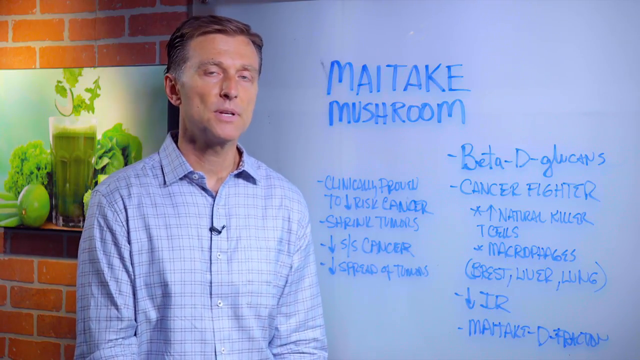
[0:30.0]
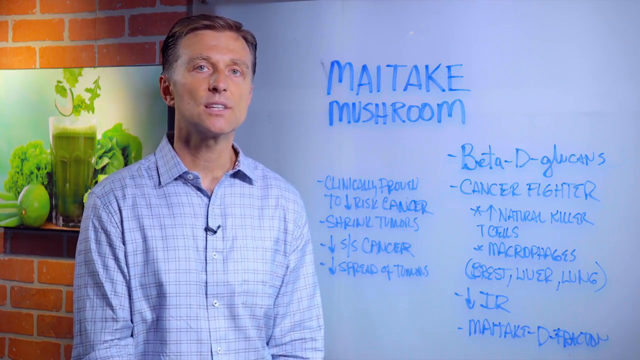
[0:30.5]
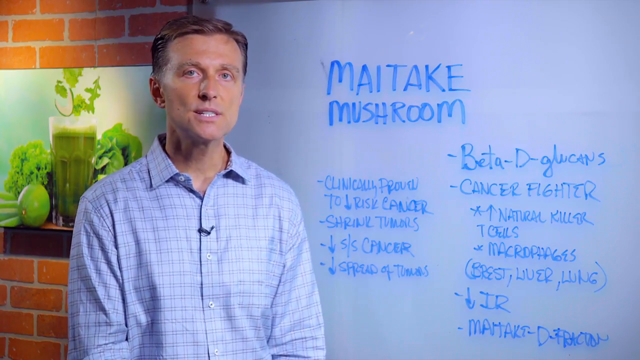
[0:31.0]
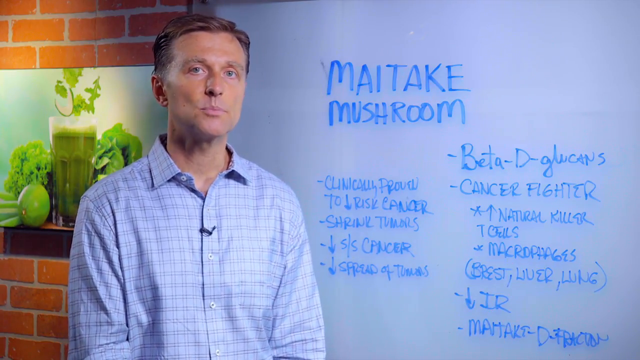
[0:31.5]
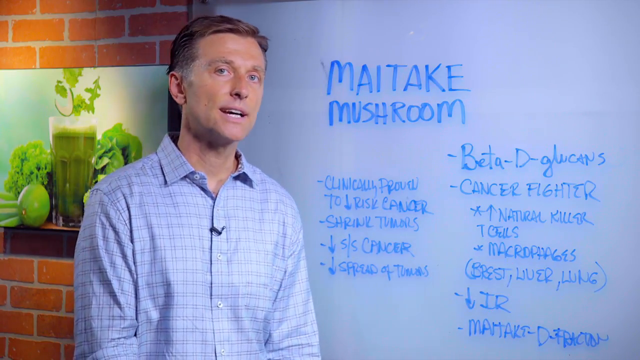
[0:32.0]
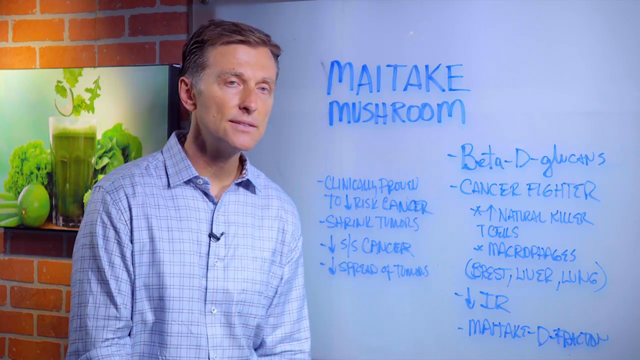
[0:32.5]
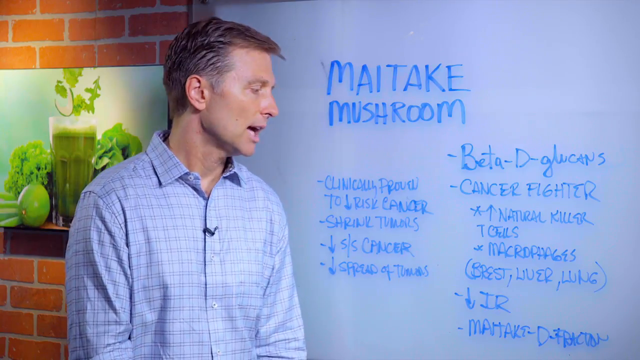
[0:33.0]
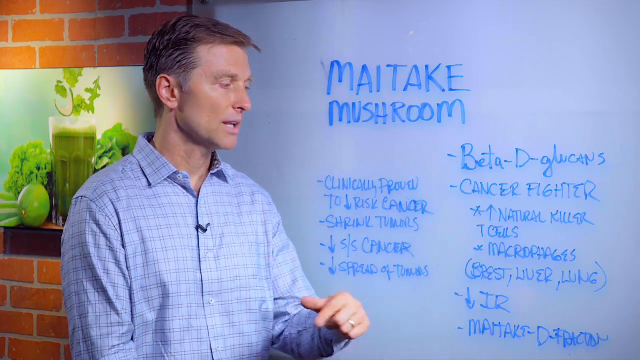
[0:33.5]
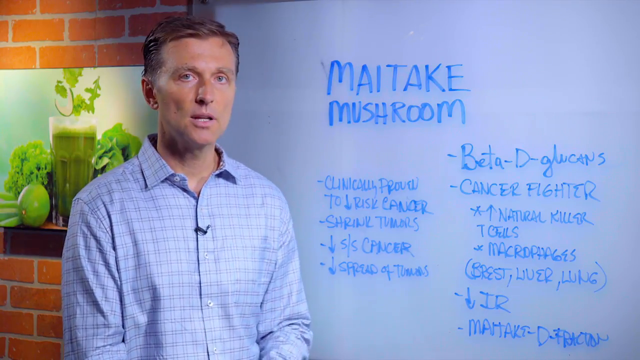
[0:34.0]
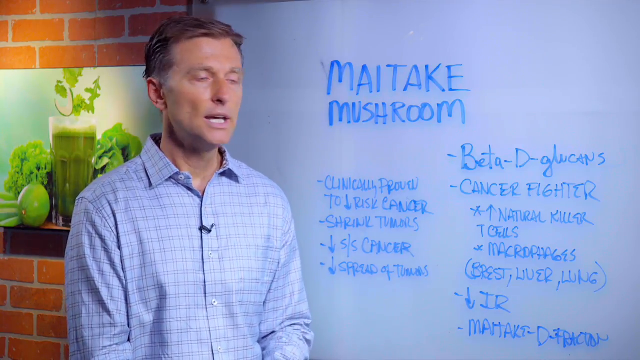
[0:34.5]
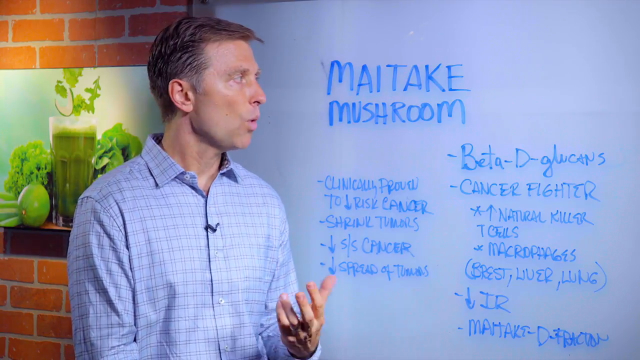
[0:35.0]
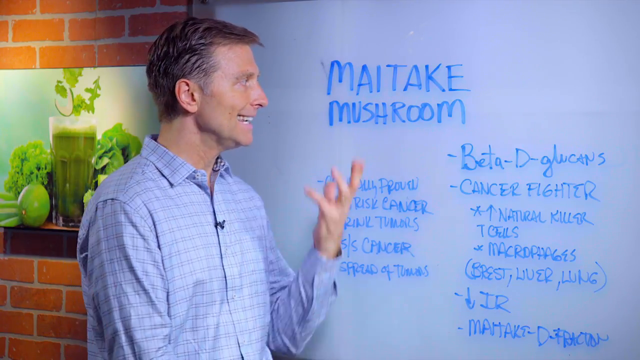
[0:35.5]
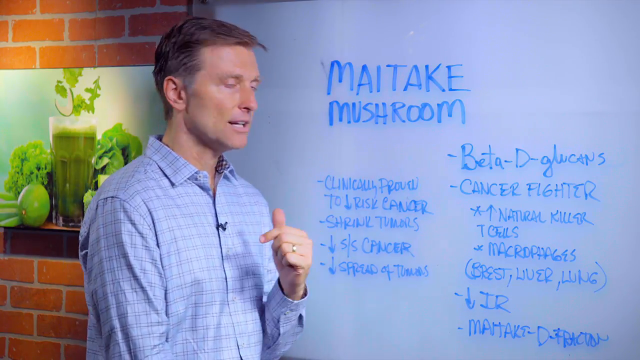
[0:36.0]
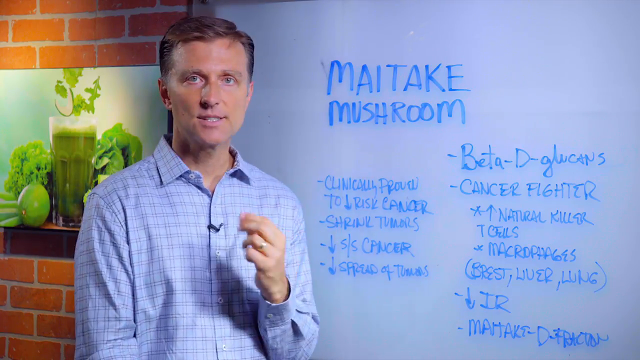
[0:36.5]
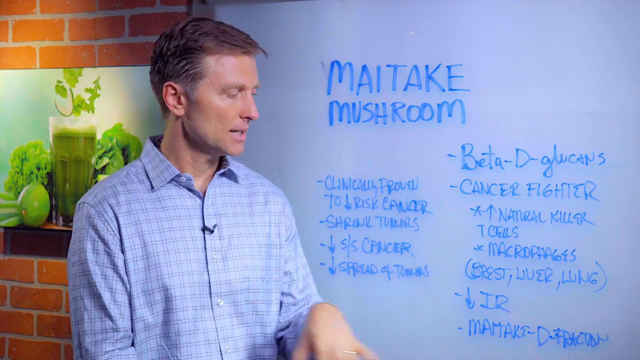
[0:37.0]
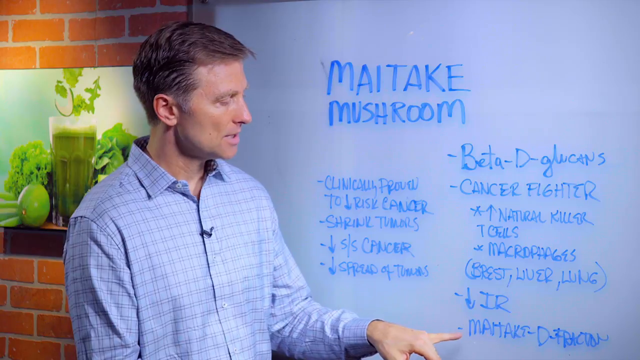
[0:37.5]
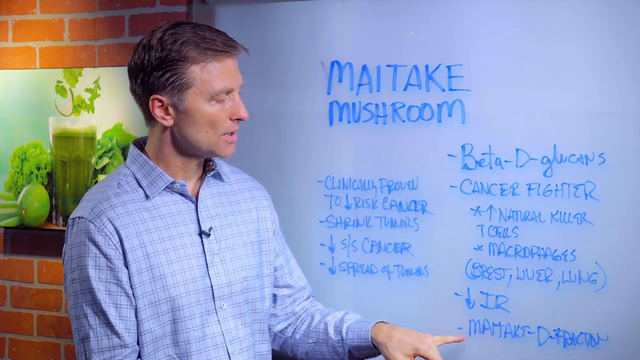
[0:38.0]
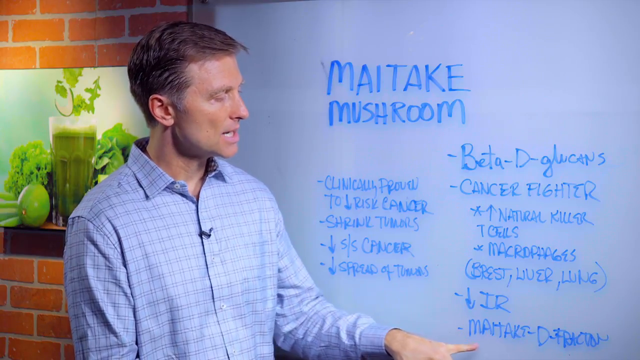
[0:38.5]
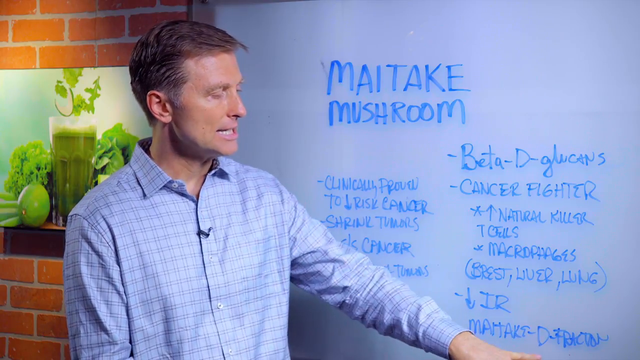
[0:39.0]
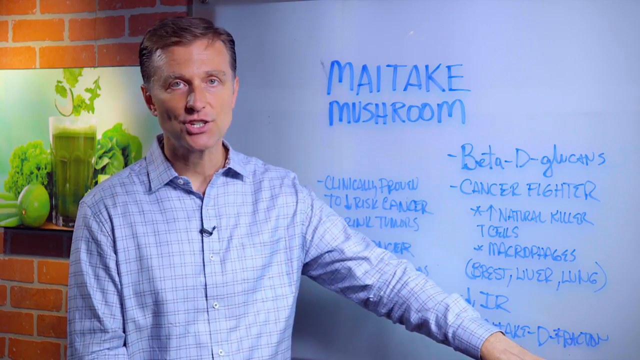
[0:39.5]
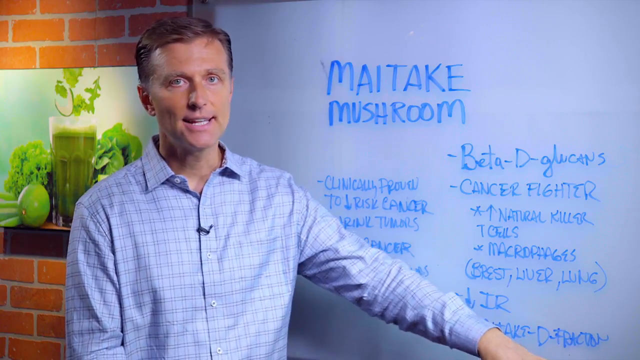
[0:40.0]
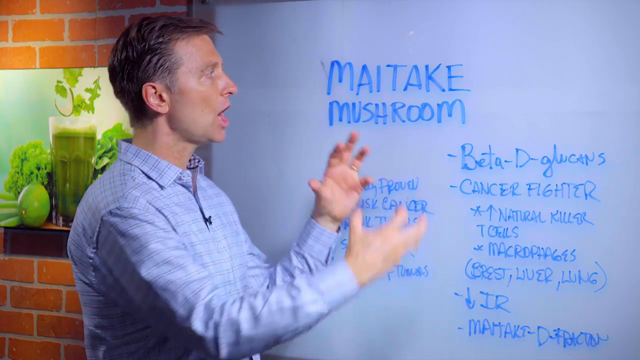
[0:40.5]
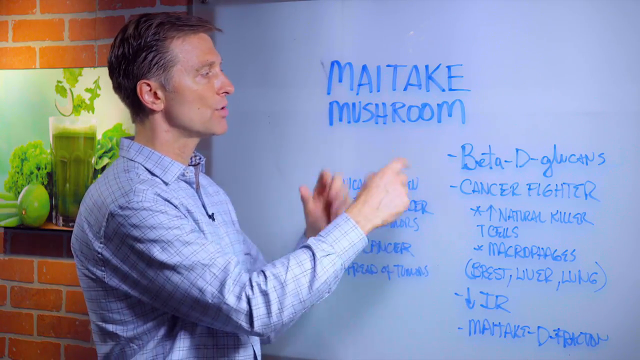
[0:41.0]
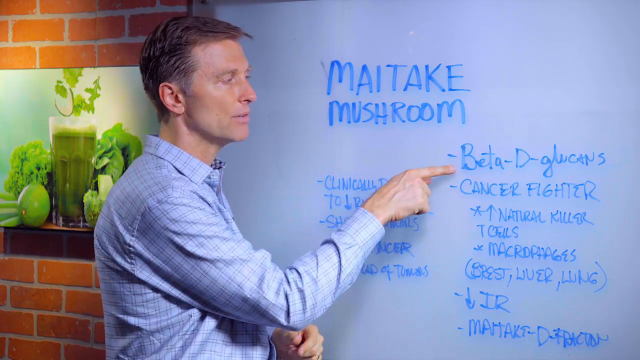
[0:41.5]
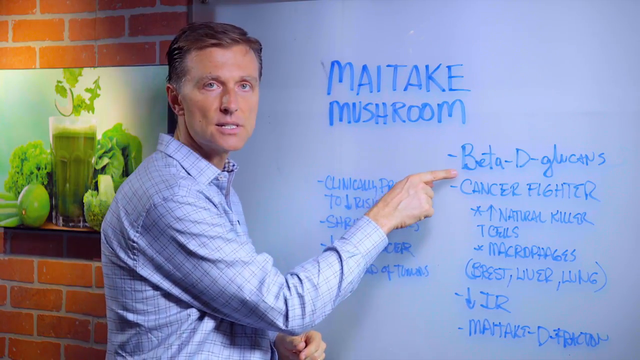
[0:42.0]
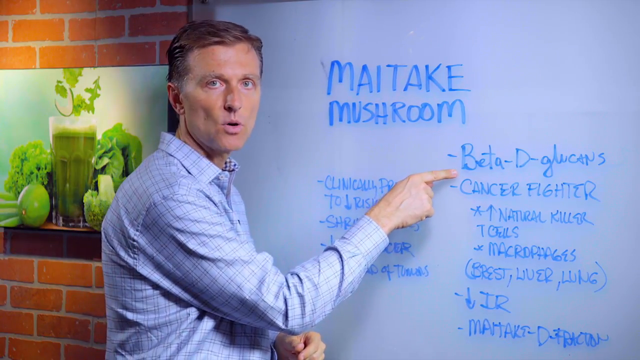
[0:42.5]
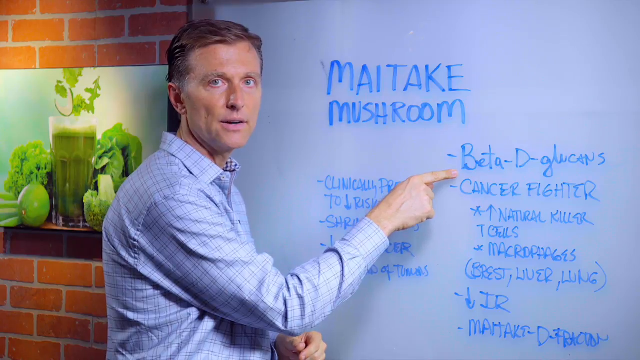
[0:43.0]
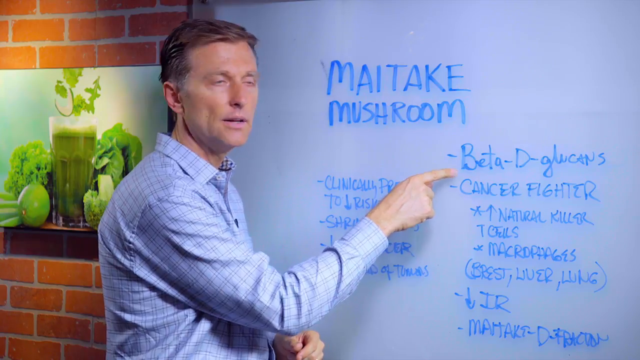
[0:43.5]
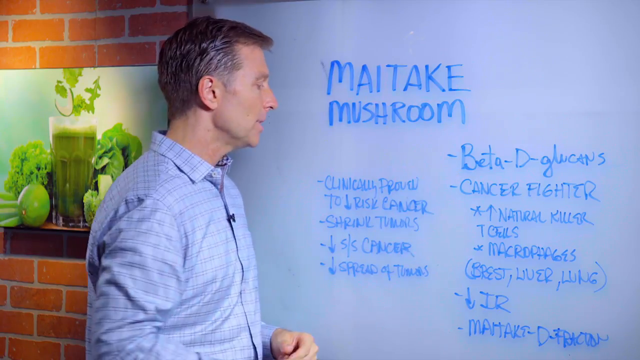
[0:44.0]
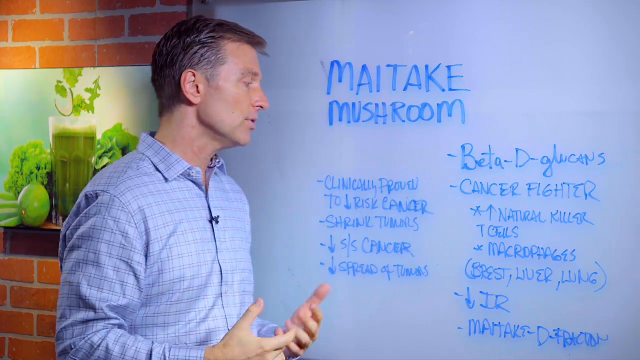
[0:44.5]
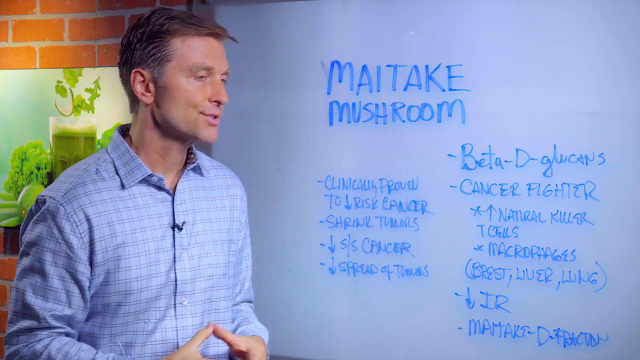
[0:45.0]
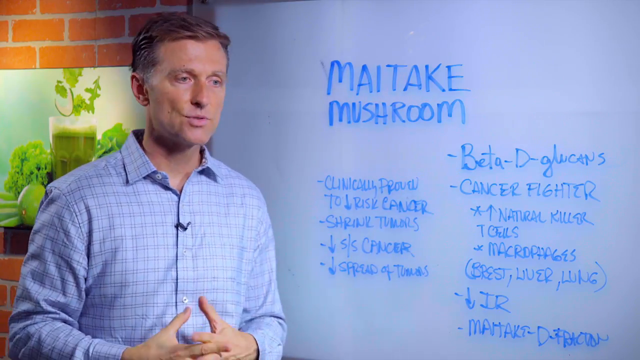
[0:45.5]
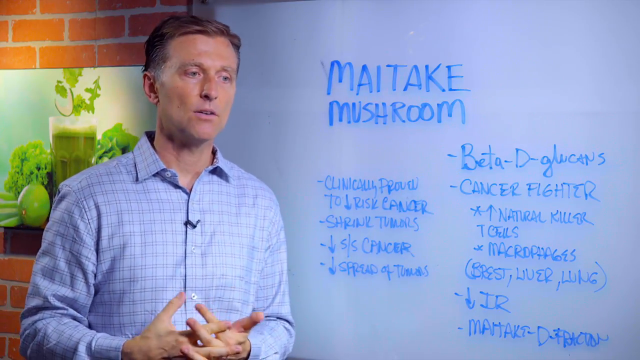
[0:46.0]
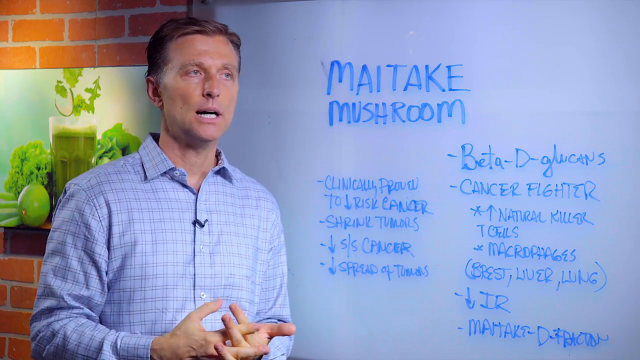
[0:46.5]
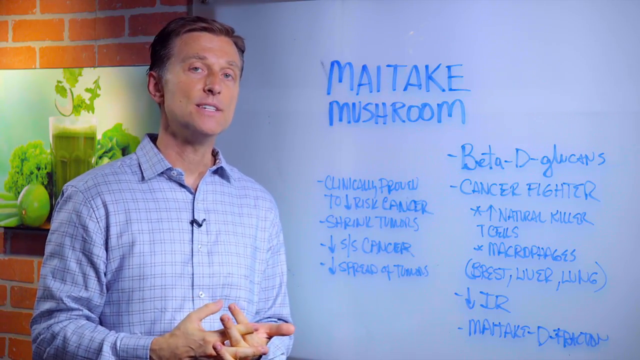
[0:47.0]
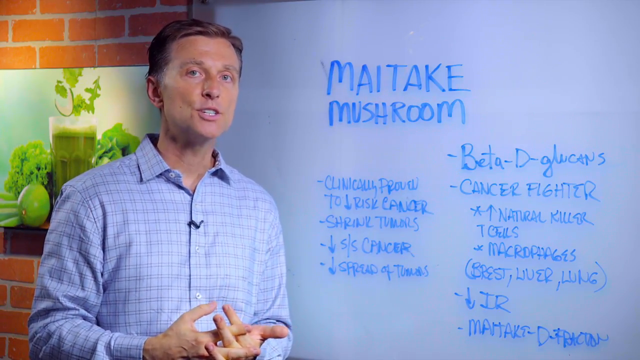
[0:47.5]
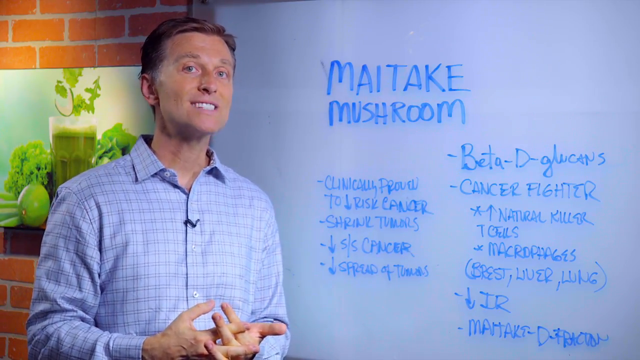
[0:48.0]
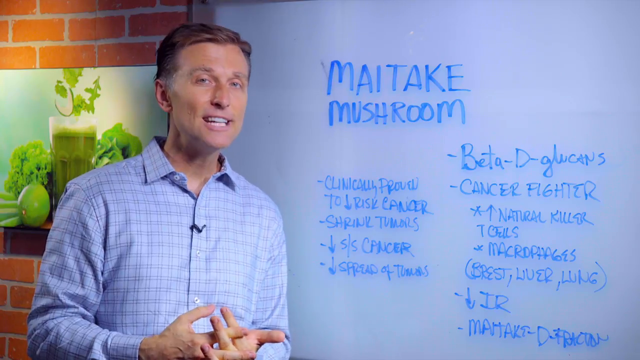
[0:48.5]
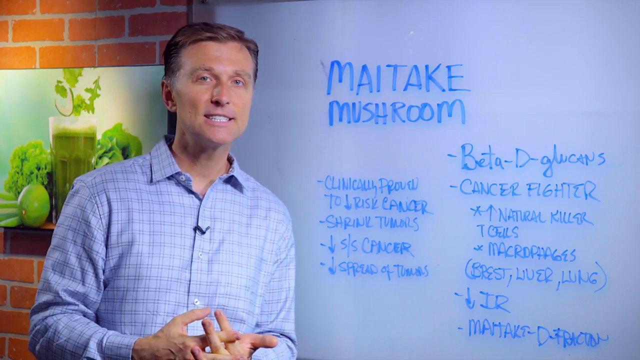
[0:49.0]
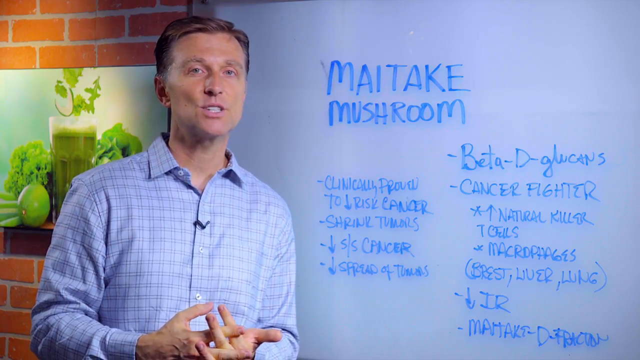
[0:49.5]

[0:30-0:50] The man continues speaking into the camera while standing. He wears a light blue collared shirt. He looks back and forth twice between the whiteboard to his right and the camera. Looking at the whiteboard and then back at the camera, he makes a gesture spacing his fingers out a little and quickly puts his hand back down. Mostly out of the camera frame, he points at the lower half of the right column of blue writing. He then points with his pointer finger at the top item in the right-hand column, the writing that begins with "beta", while looking at the camera and talking. He turns back to the camera and keeps speaking for a couple of seconds.